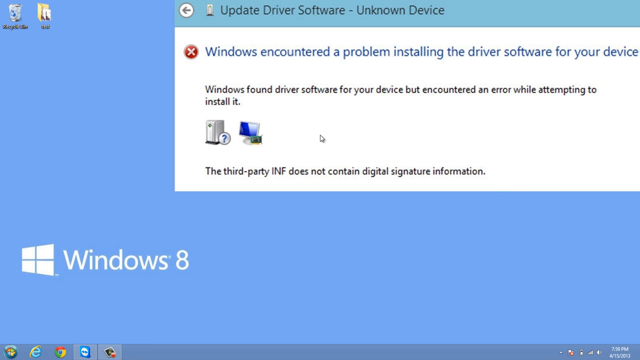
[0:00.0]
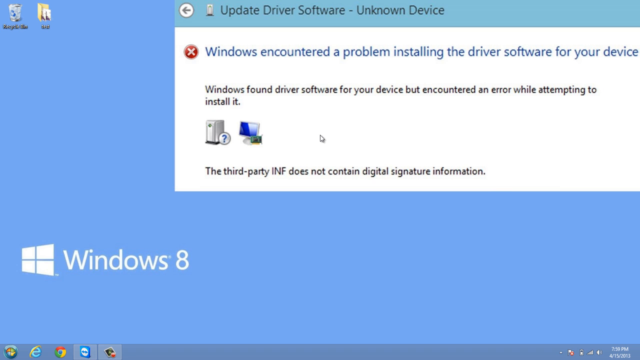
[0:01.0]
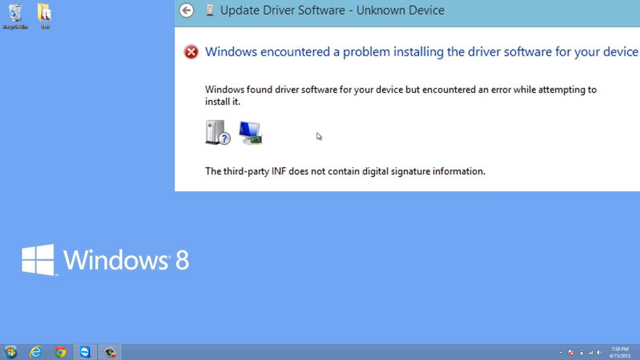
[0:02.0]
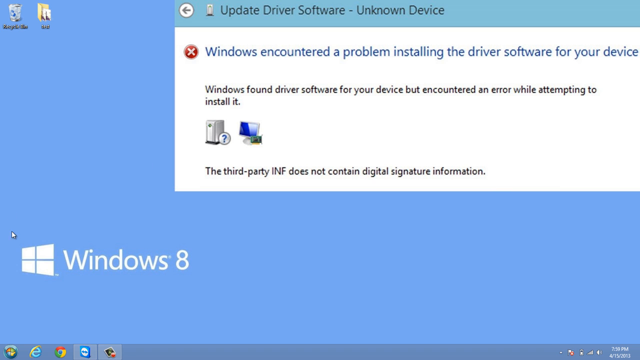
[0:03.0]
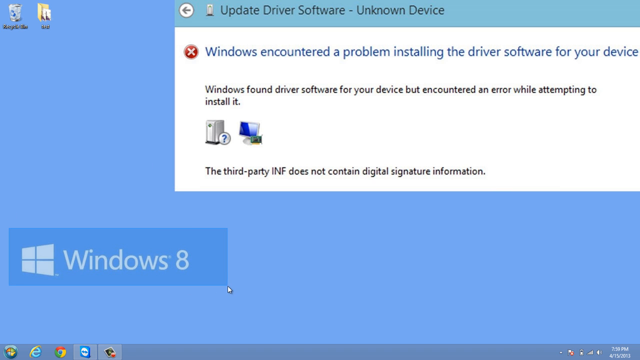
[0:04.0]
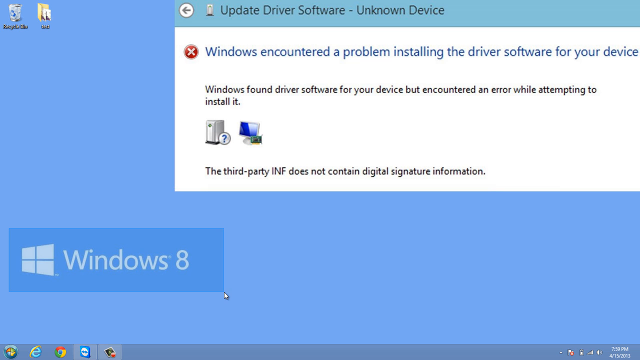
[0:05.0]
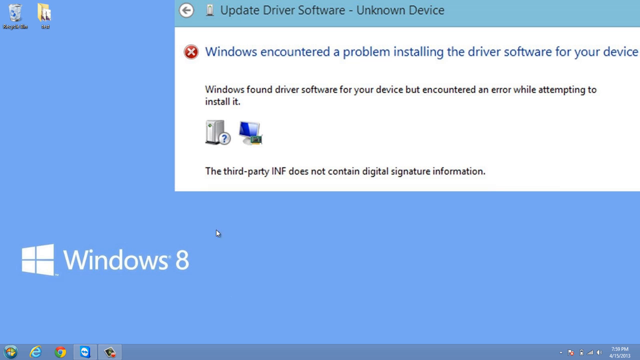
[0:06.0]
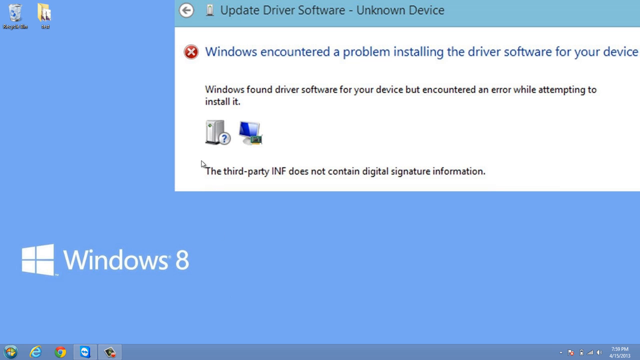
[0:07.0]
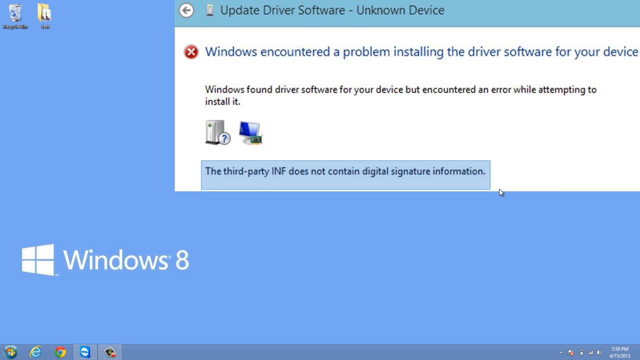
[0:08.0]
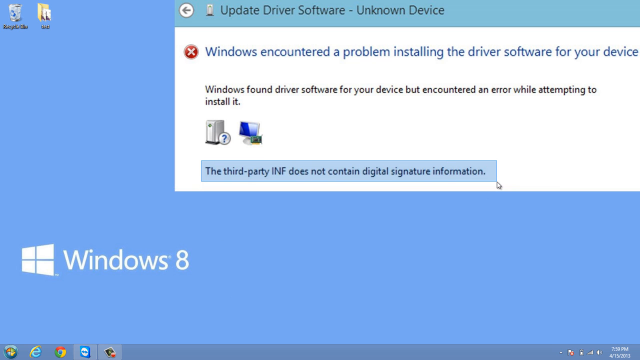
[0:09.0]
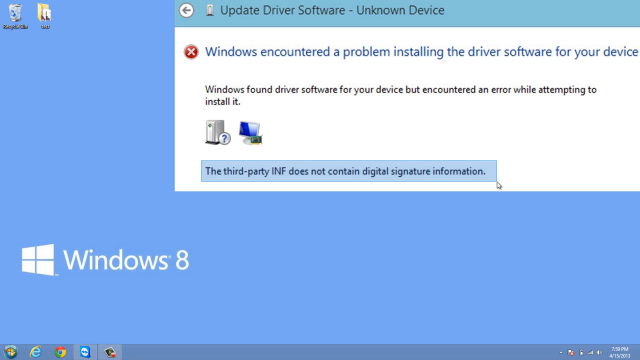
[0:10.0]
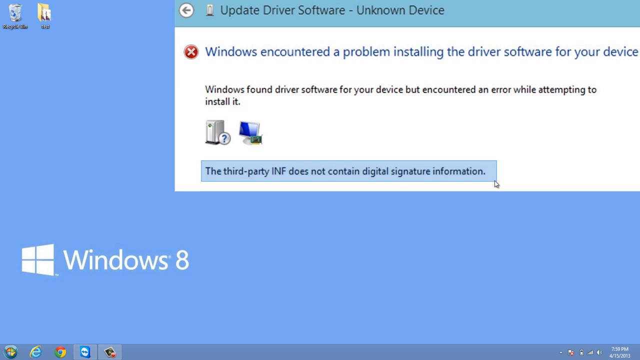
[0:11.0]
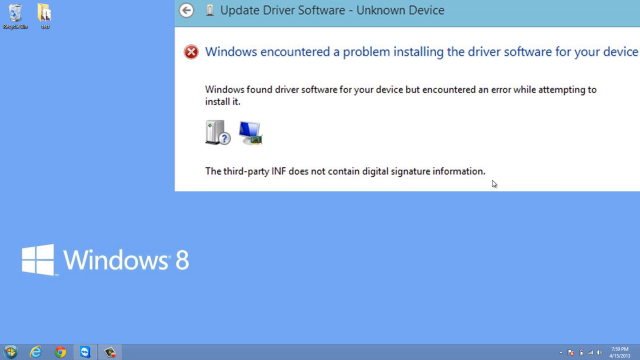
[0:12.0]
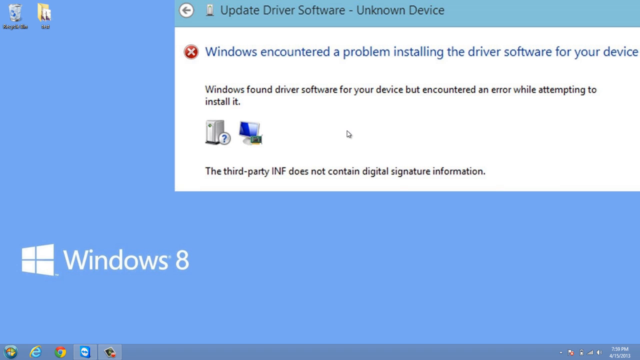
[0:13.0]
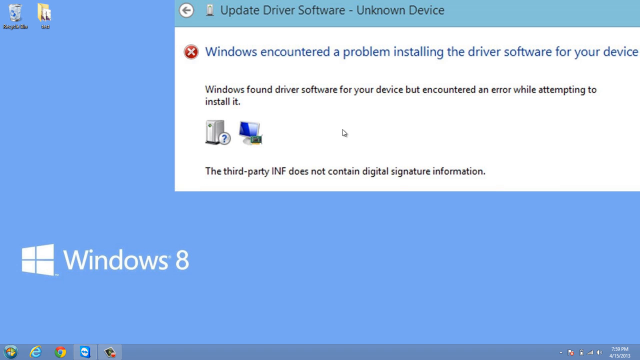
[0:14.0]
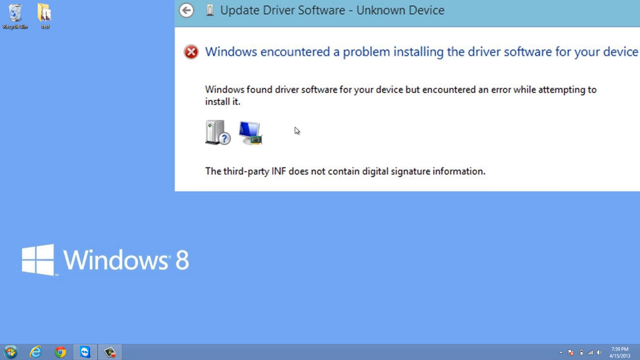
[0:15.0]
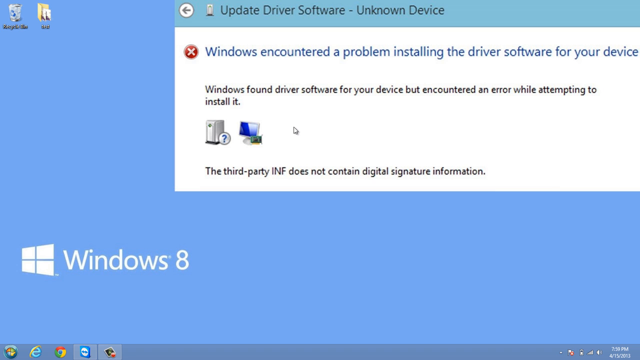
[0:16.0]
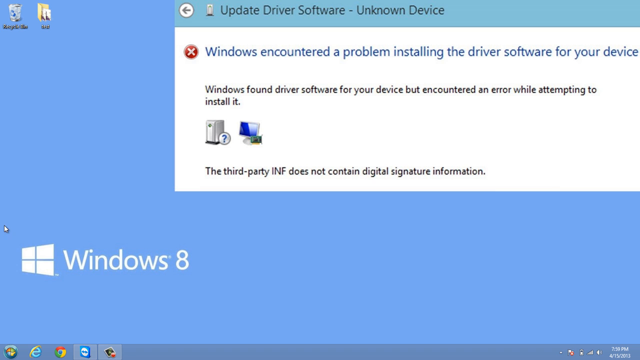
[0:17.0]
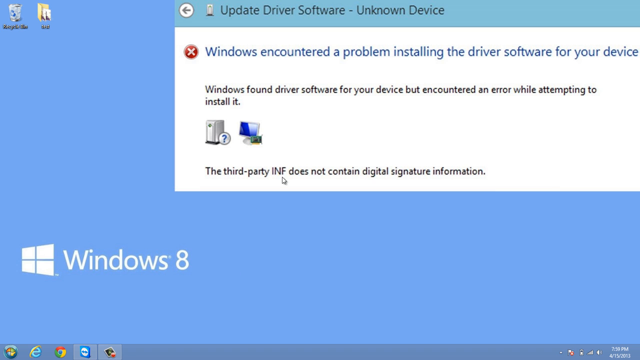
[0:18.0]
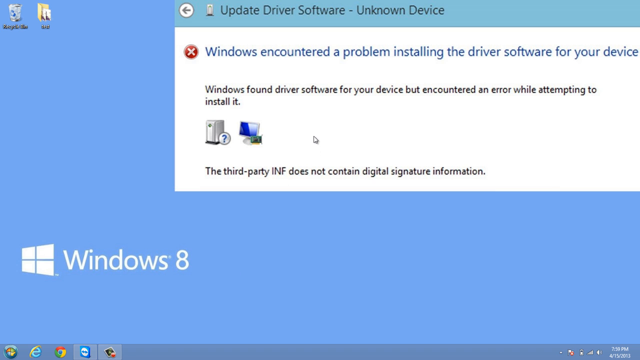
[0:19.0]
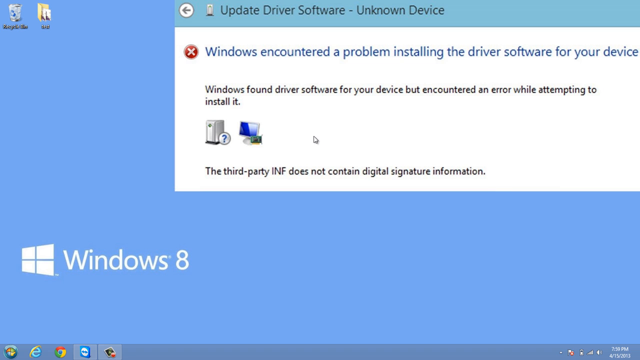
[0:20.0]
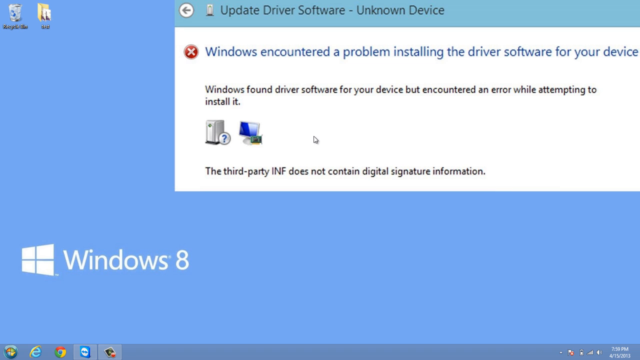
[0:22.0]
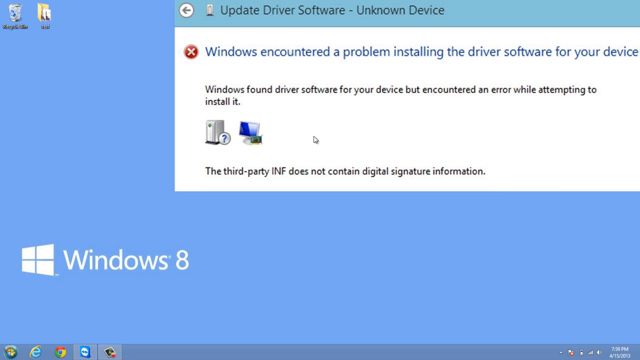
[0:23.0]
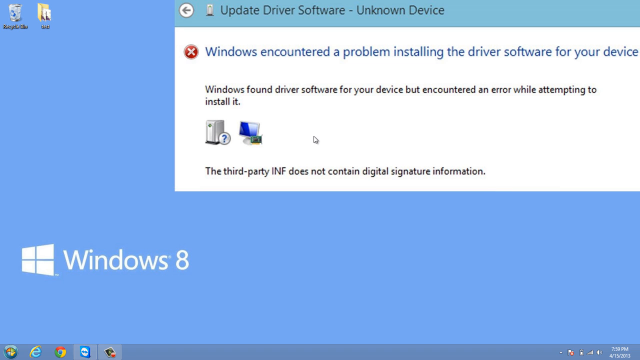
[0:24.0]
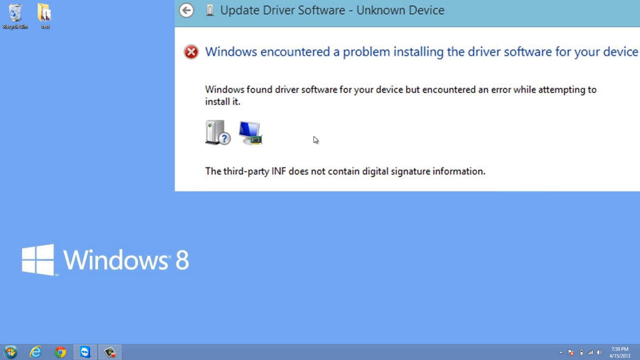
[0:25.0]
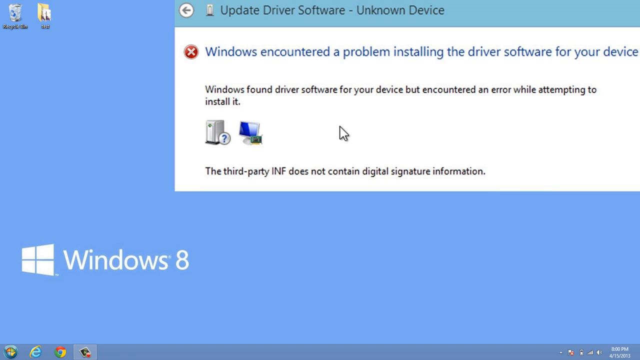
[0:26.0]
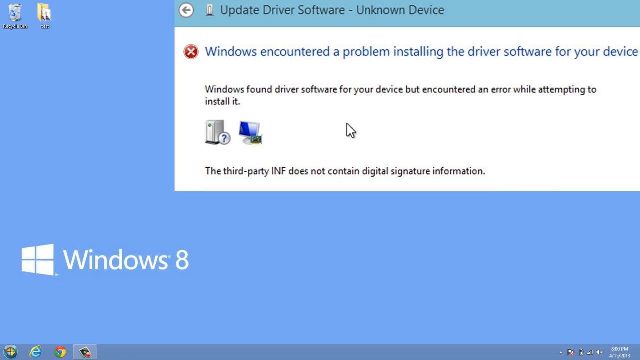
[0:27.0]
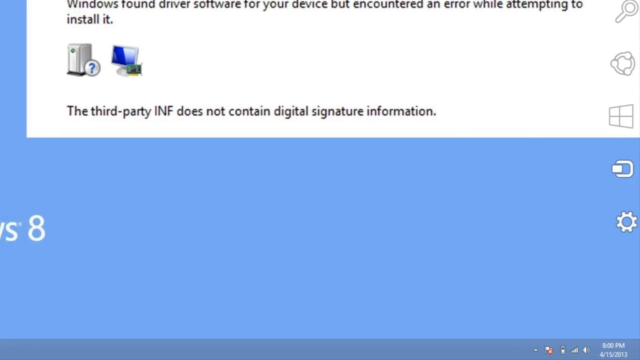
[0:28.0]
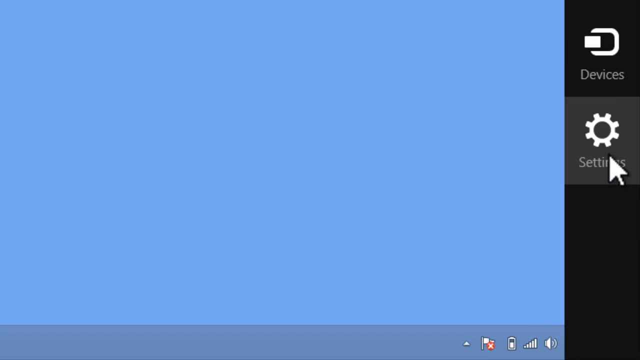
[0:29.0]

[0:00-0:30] A Windows page is on the computer screen, apparently a Windows 8 troubleshooting page. At the top is an "update driver software - unknown device" warning reading "Windows encountered a problem installing the driver software for your device." The mouse icon clicks on the settings icon, and the warning comes up again. The description "the third-party INF does not contain digital signature information" is highlighted. The screen is blue and shows the Windows 8 icon.